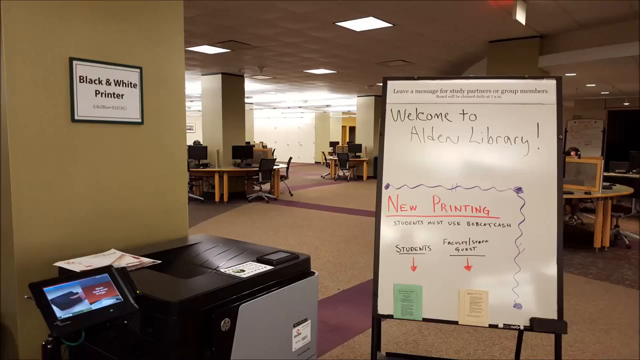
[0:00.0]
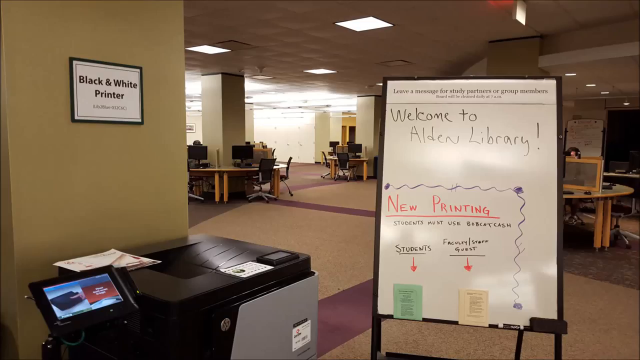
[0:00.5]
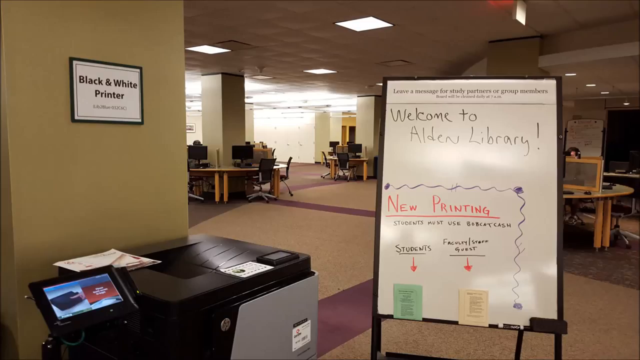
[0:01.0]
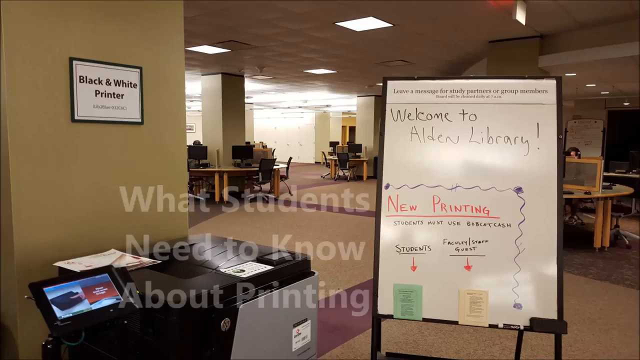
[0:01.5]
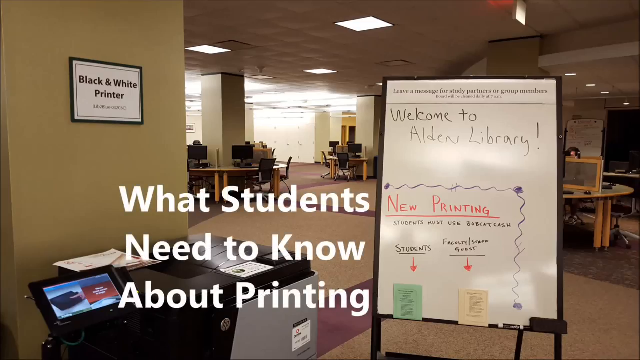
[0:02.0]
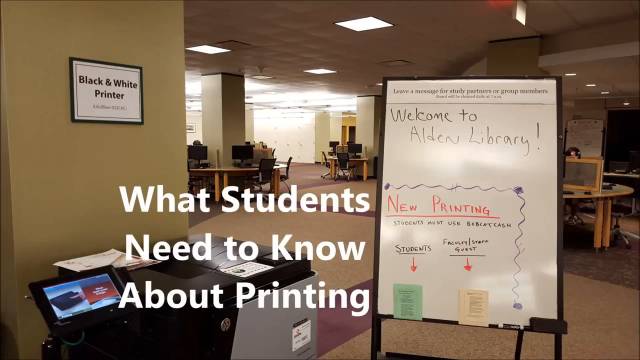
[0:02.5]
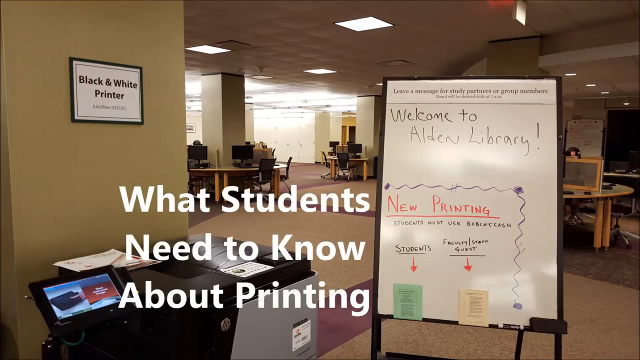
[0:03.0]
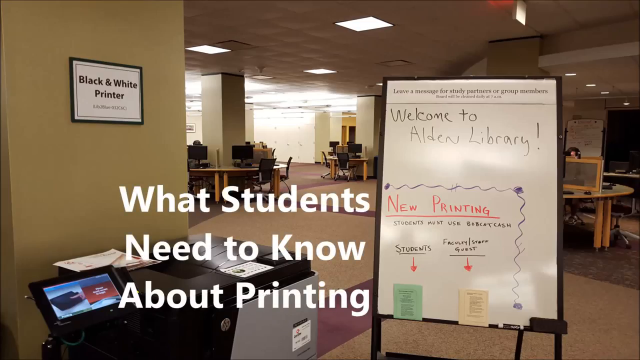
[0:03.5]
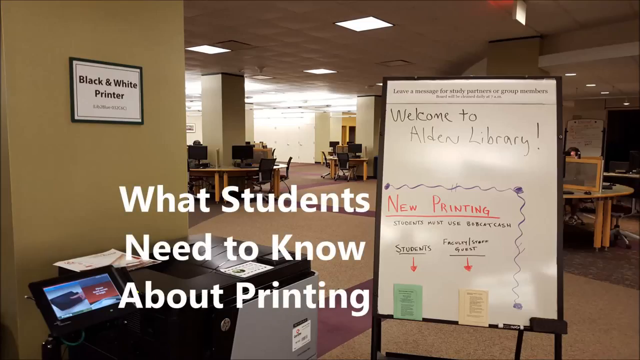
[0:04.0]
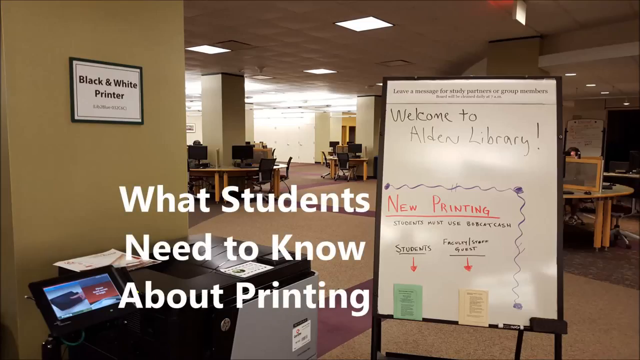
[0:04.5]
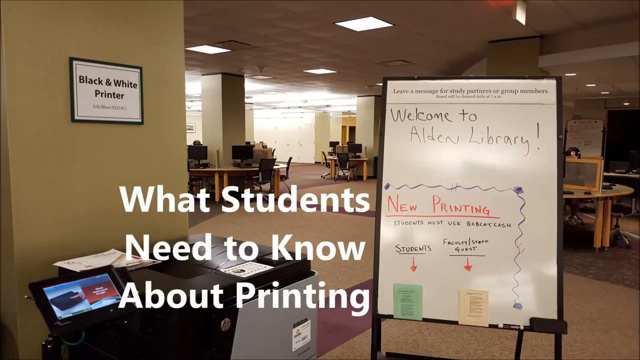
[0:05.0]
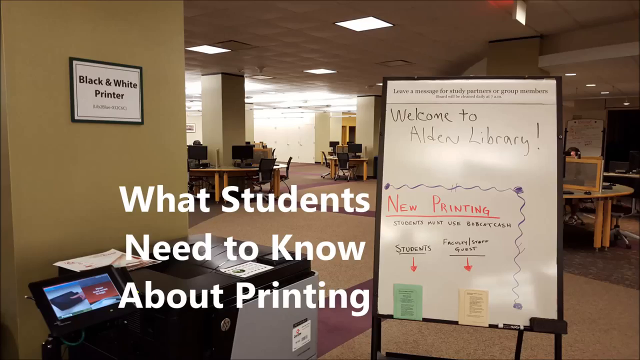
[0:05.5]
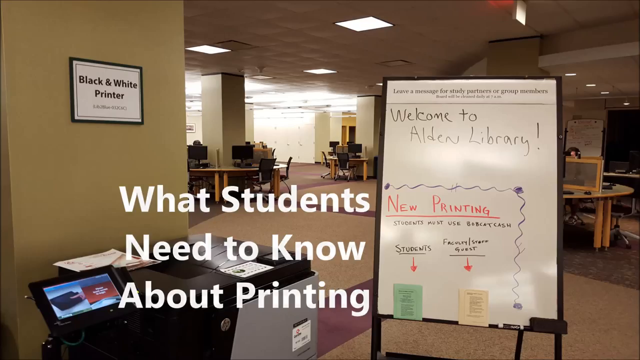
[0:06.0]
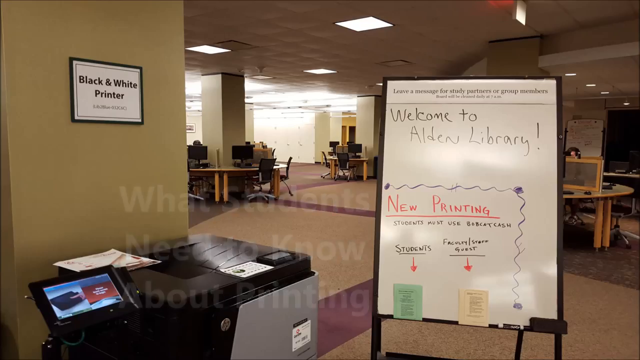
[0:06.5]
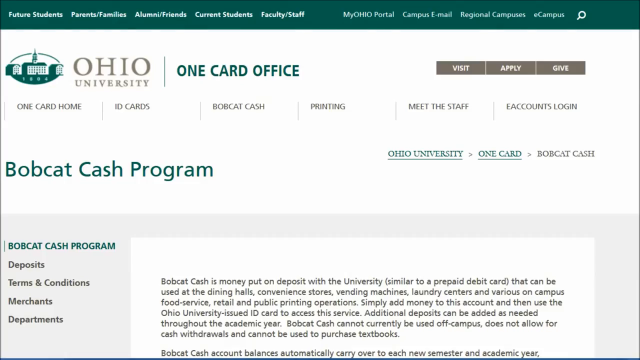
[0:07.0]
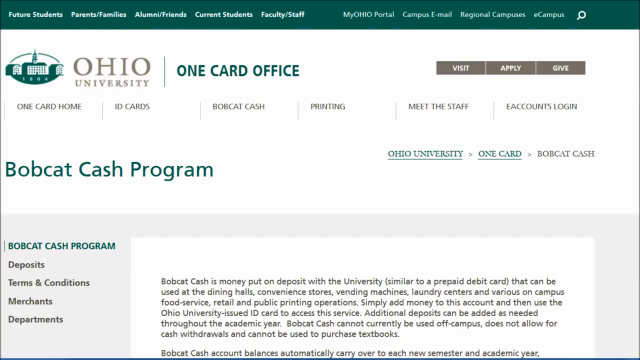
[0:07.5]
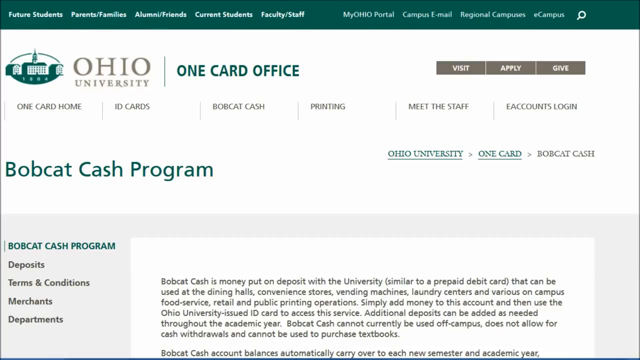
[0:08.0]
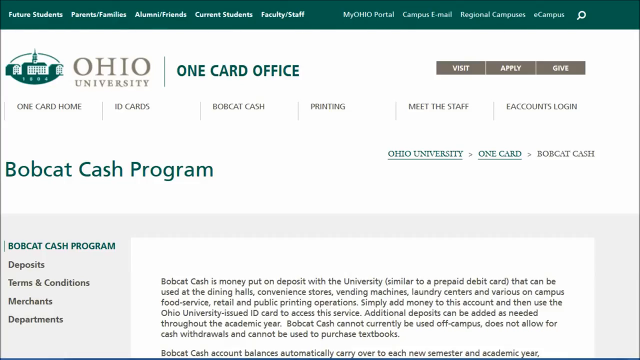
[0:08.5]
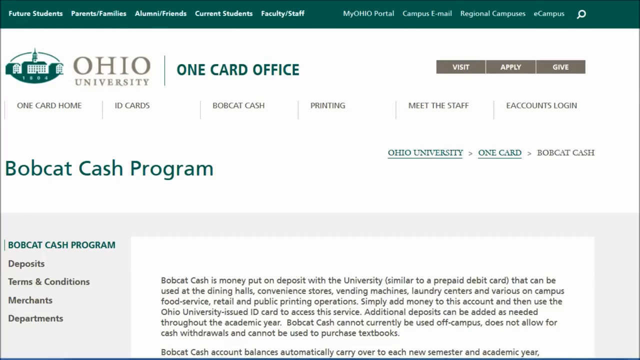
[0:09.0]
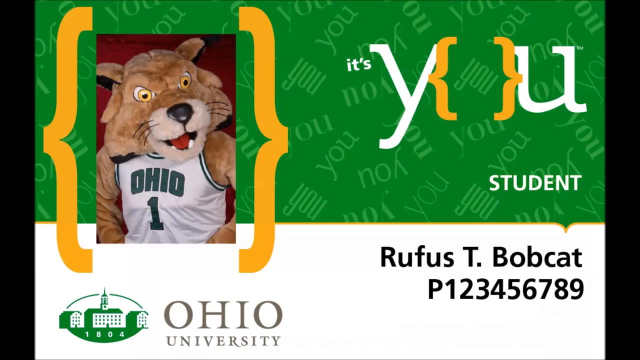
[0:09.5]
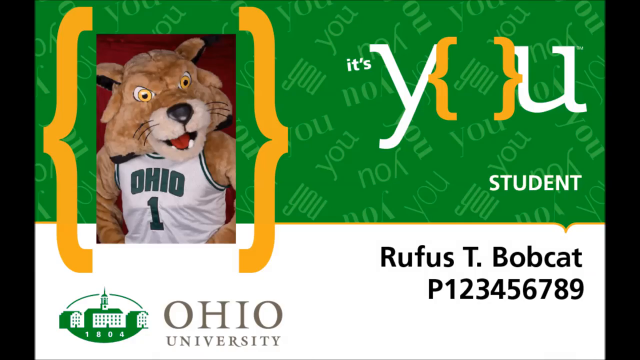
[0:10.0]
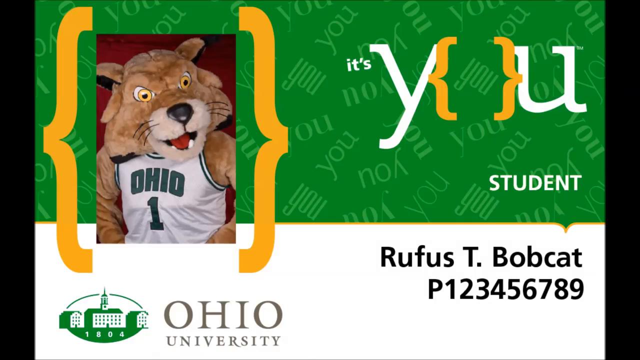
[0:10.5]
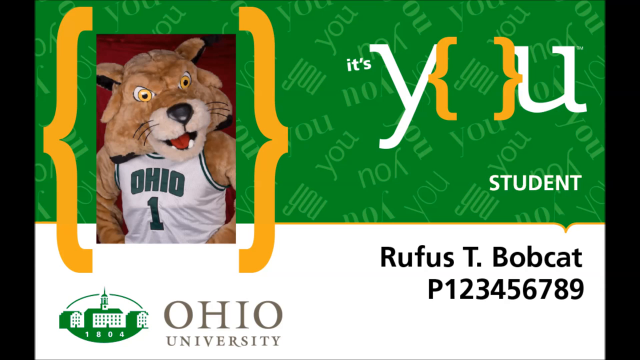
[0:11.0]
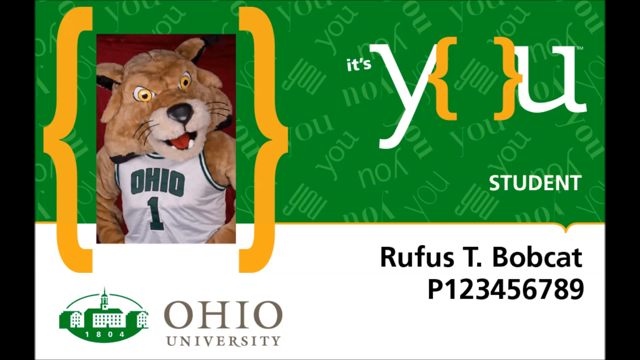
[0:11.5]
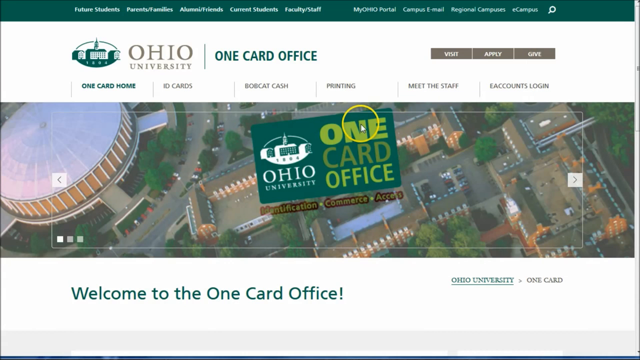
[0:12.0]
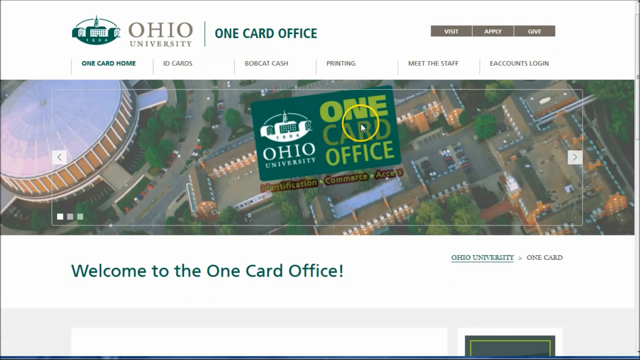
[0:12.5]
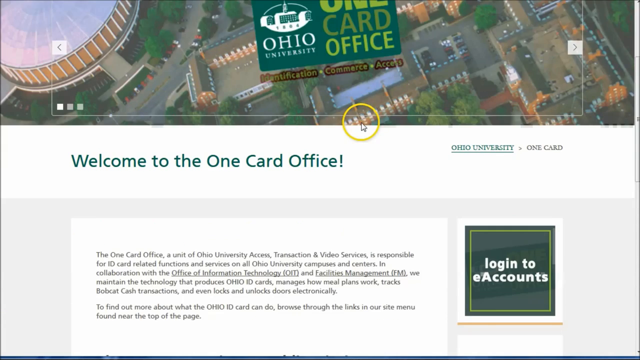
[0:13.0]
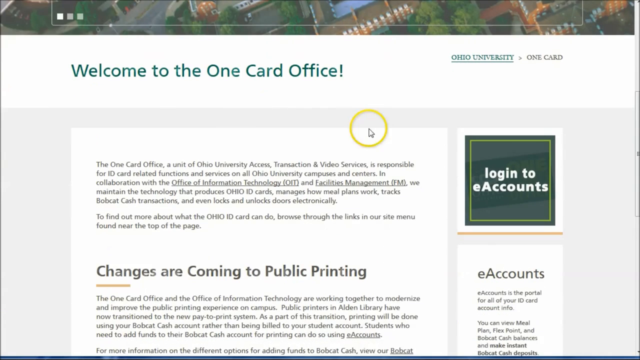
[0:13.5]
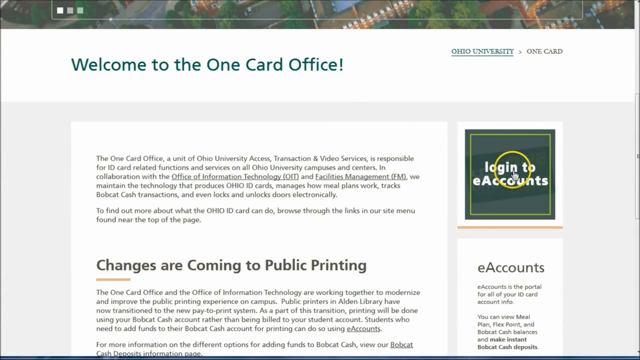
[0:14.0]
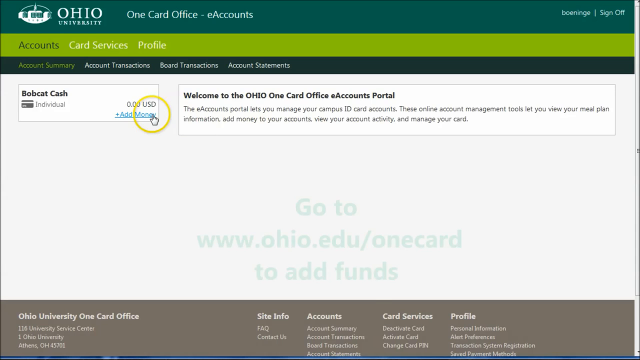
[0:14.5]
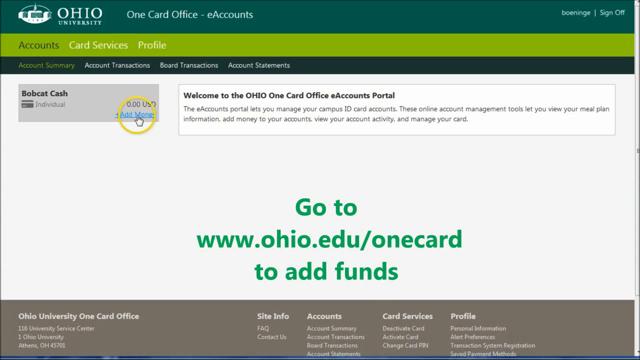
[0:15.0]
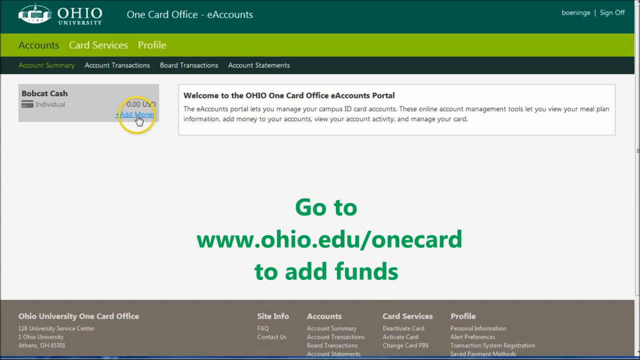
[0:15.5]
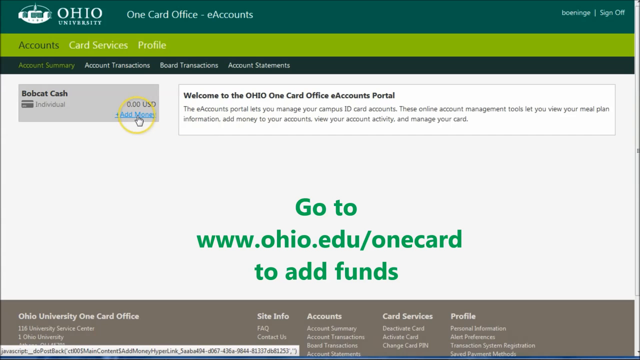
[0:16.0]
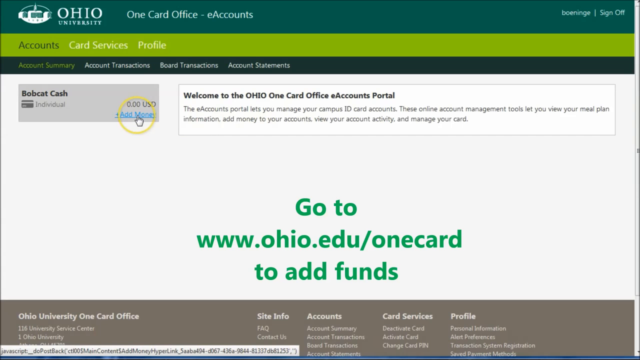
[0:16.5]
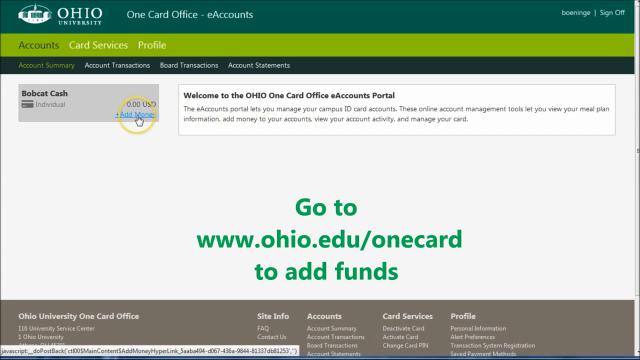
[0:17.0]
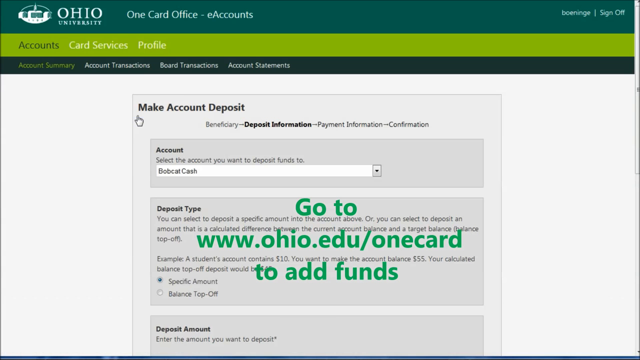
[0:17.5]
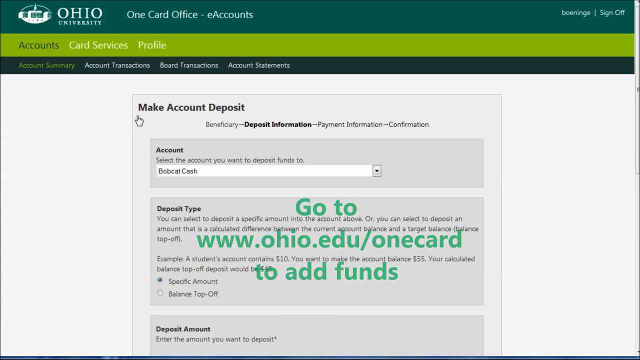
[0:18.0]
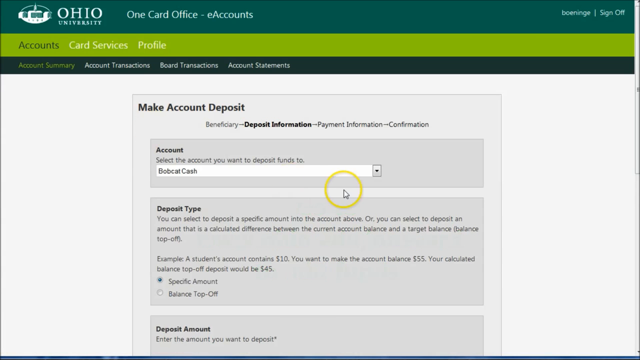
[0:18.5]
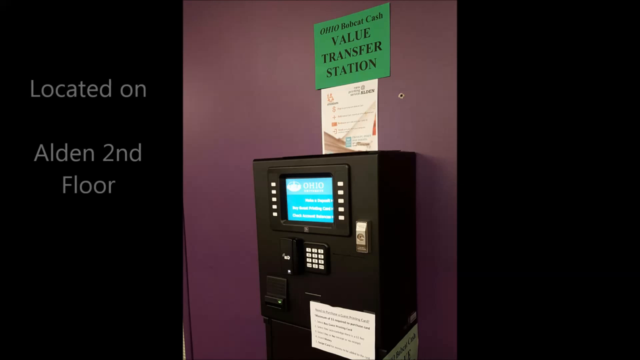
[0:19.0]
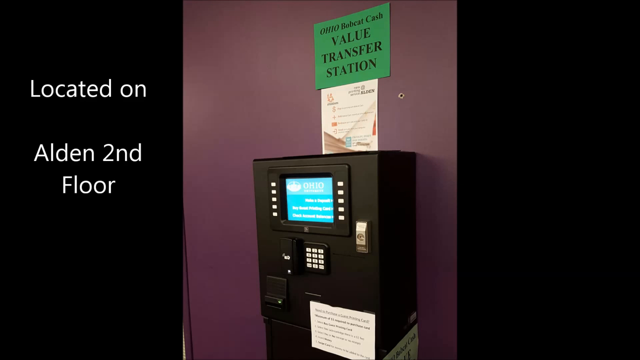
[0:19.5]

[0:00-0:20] Set in a house setting, the video states what students need to know about printing, and the picture is taken in a library. A frame states a black and white printer that only deals with black and white papers, with no colour. The video shows the office card office in Ohio, giving emails and numbers to contact, the meet-up point, and where the office is located. It also shows that the company is next to Ohio University.